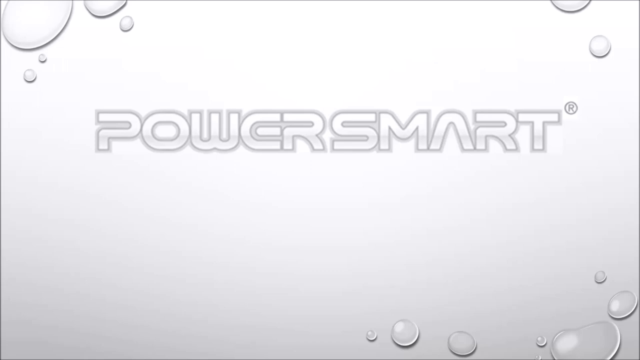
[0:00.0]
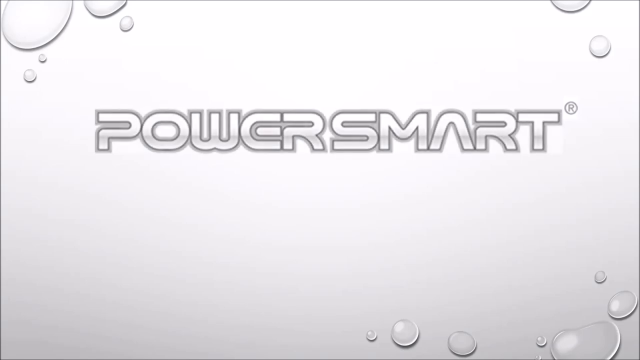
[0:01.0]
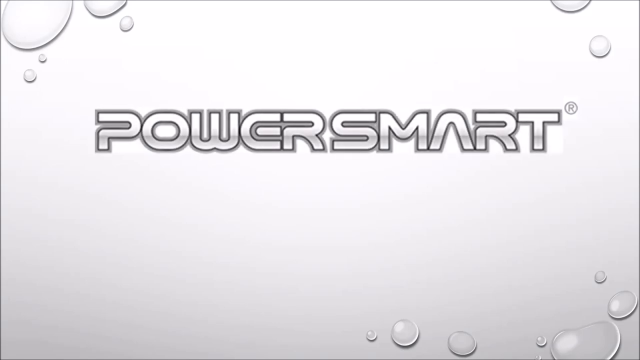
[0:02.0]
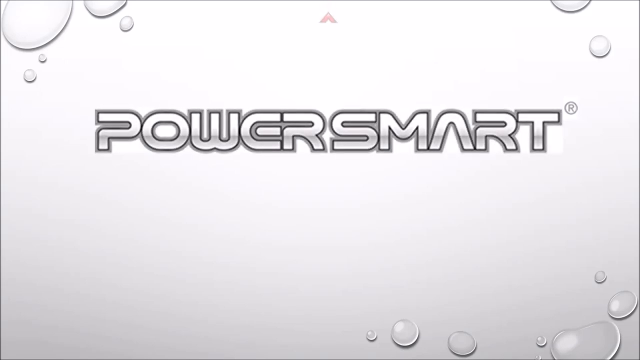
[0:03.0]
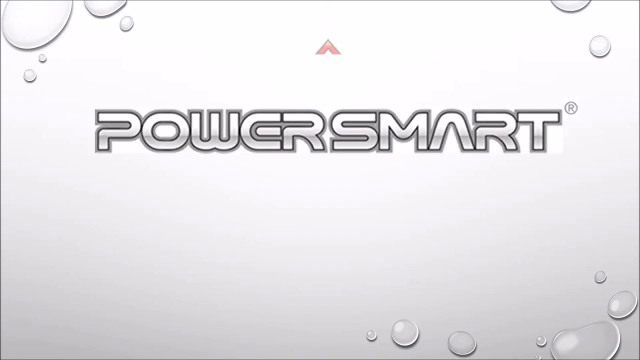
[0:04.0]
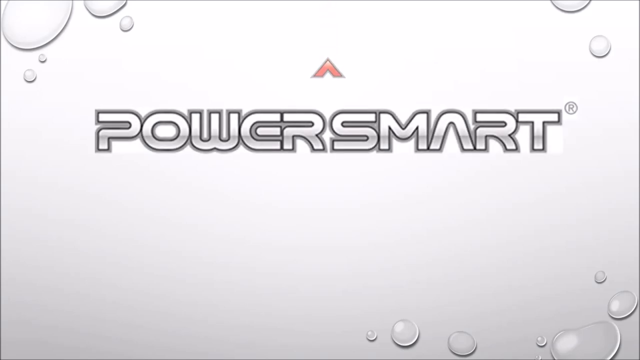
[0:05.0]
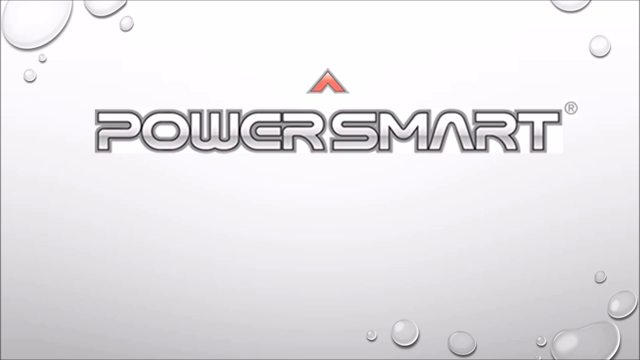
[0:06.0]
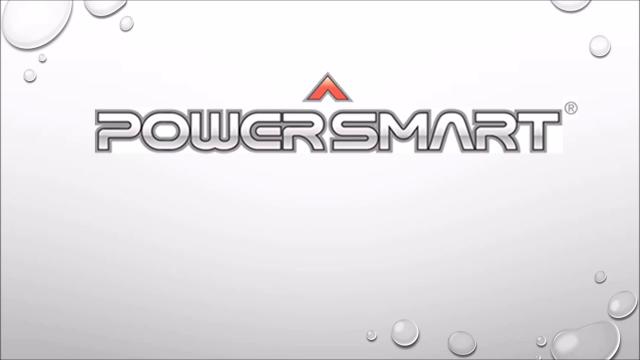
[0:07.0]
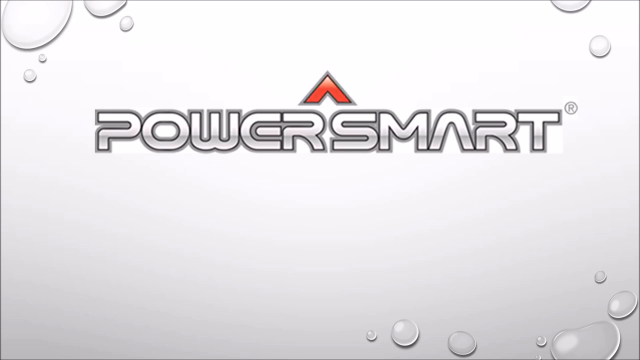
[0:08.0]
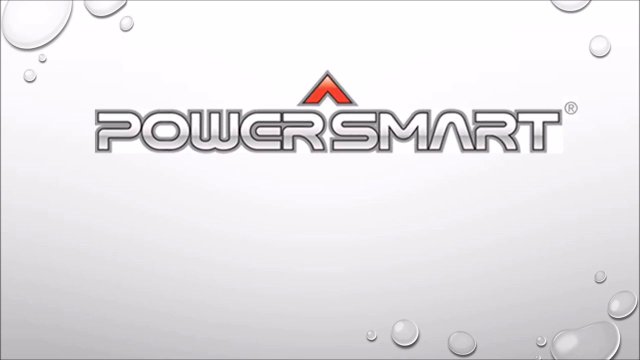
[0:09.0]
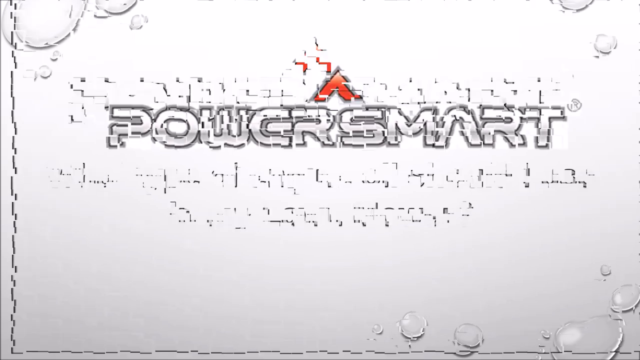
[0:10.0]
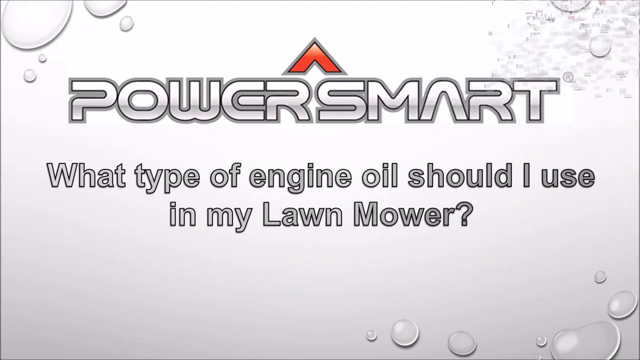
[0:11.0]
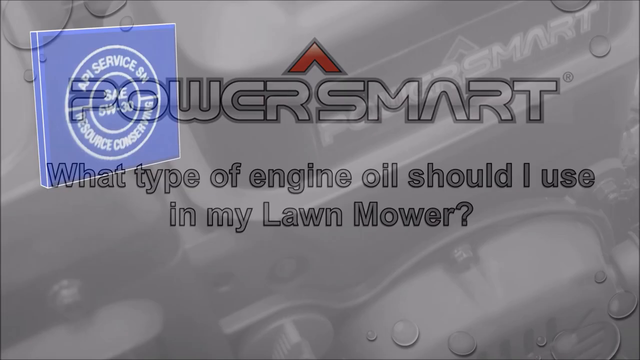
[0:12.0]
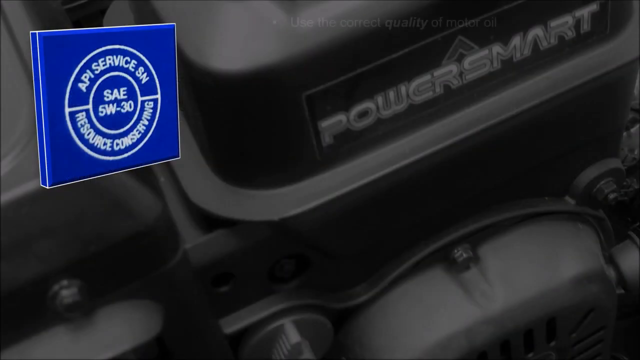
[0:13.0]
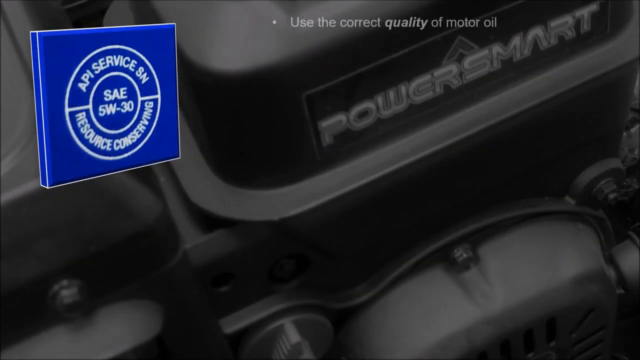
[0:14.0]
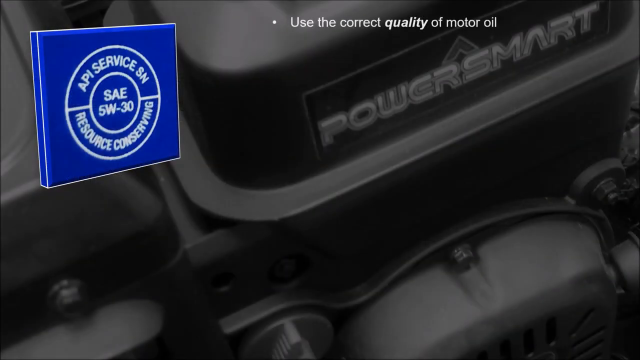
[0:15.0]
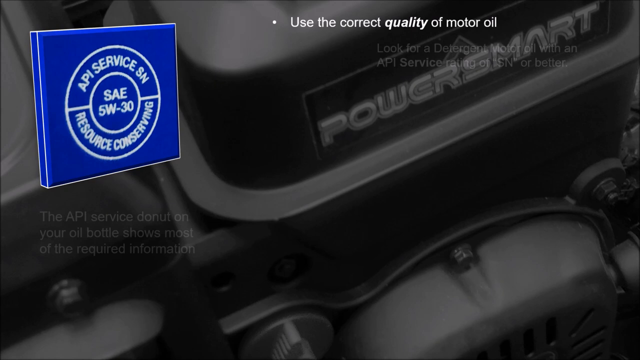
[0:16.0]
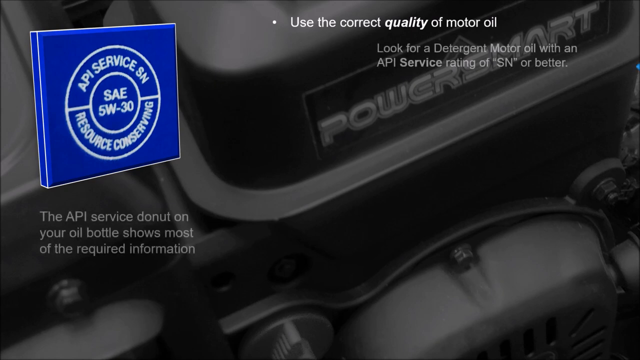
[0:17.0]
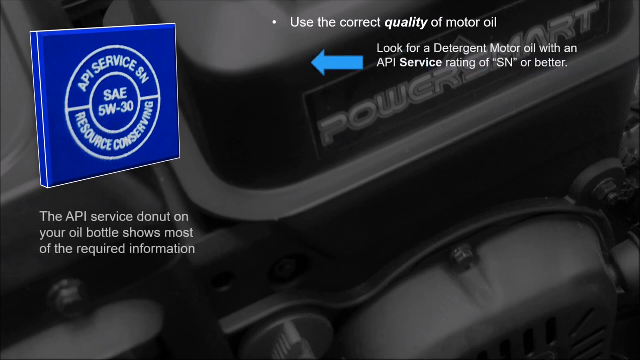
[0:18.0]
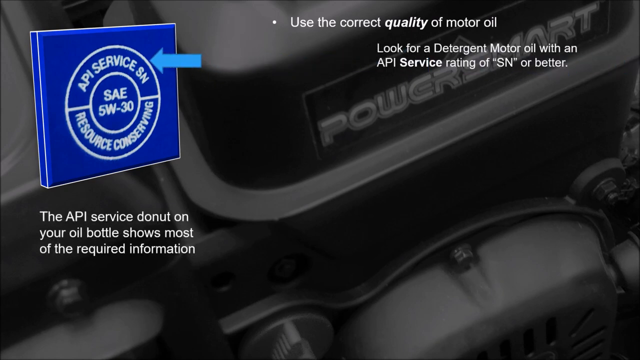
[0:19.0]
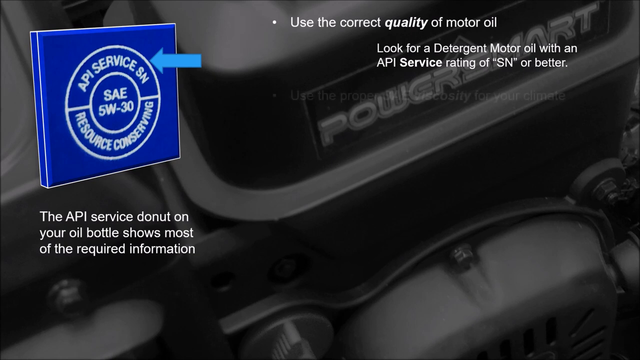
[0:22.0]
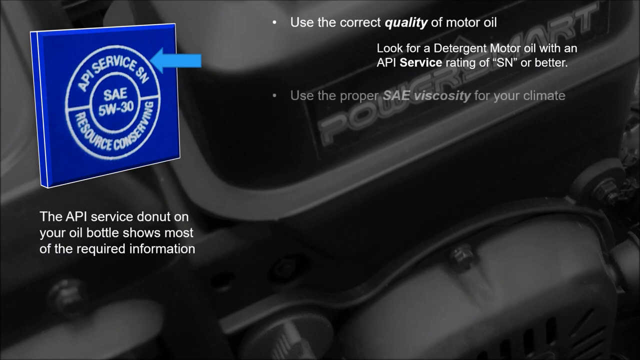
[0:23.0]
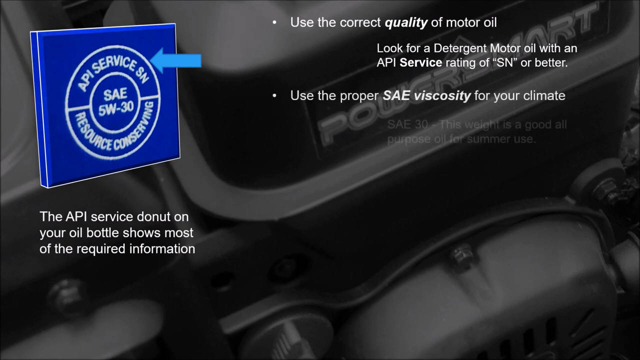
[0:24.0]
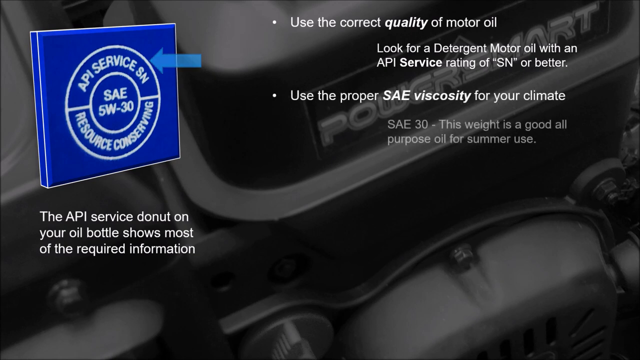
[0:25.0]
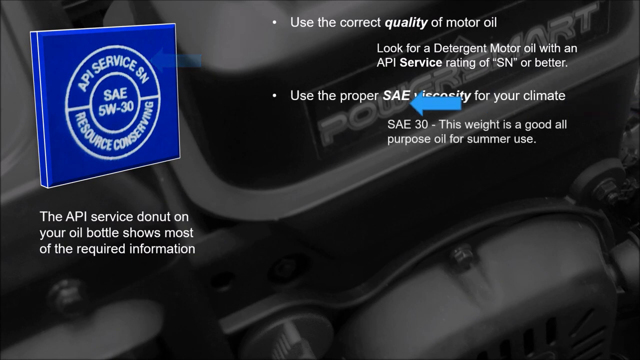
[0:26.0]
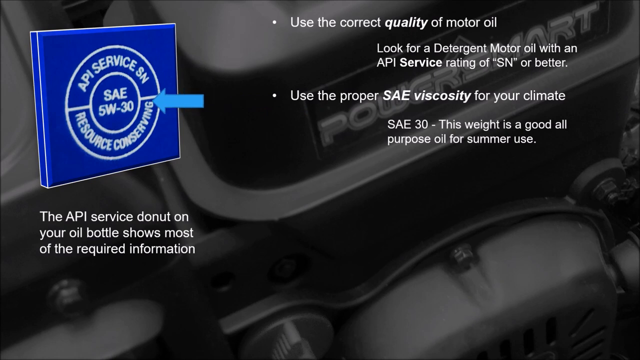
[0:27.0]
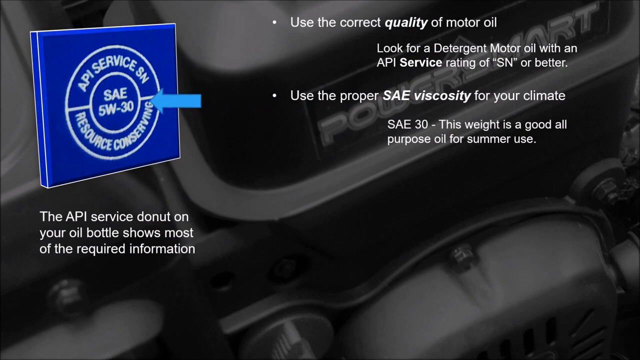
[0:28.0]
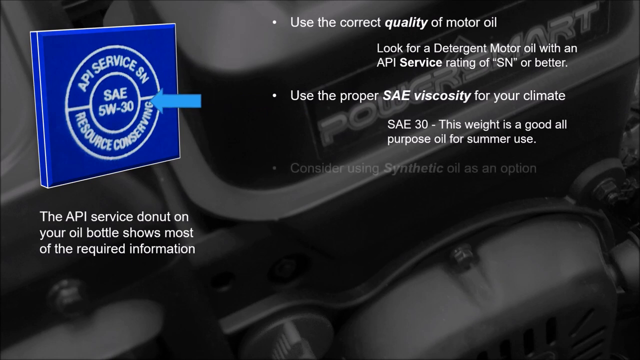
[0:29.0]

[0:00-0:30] The video opens on a white background with the words "Power Smart" used as the company logo. There are bubbles at the top left, more bubbles at the top right, and bubbles at the bottom right. A red triangle slowly comes closer to the screen, and as it reaches the words of the logo, the logo wiggles. A shattering effect transitions to the next scene, and the sentence "What type of engine oil should I use in my lawnmower?" appears below the Power Smart logo. The scene then changes to a lawnmower engine by the company PowerSmart. On the left is a blue square shape with the words "API Service SN", "SAE 5W30" and "Resource Conserving" in a circle. At the top of the screen the words "use the correct quality of motor oil, look for a detergent motor oil with API service rating of Sn or better" appear, followed at the bottom left by "the API service donut on your oil bottle shows most of the required information". A blue arrow appears from the right side of the screen, slowly moves toward the blue square and stops at it. The words "use the proper SAE viscosity for your climate, SAE 30, this weight is a good all-purpose oil for summer use" appear. Another blue arrow appears and aims at the middle of the blue square, and the words "consider using synthetic oil as an option" appear.